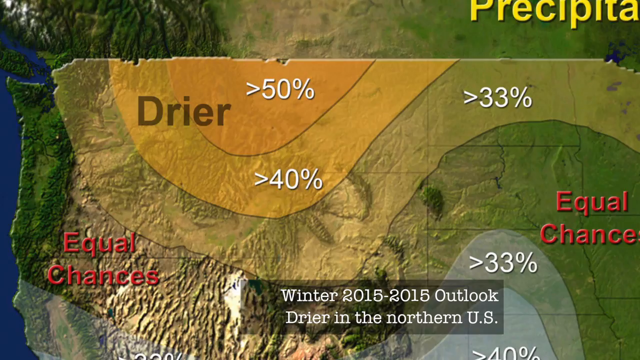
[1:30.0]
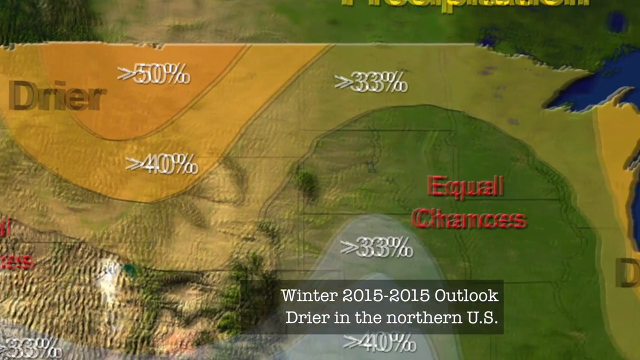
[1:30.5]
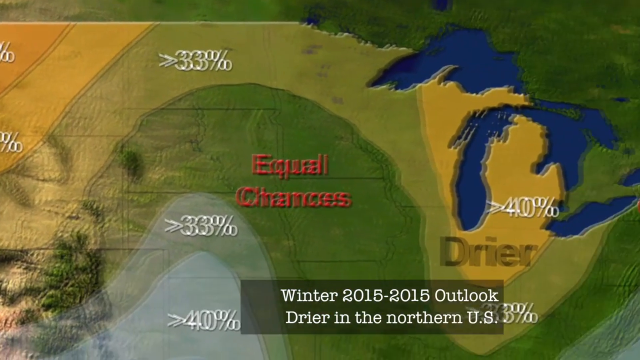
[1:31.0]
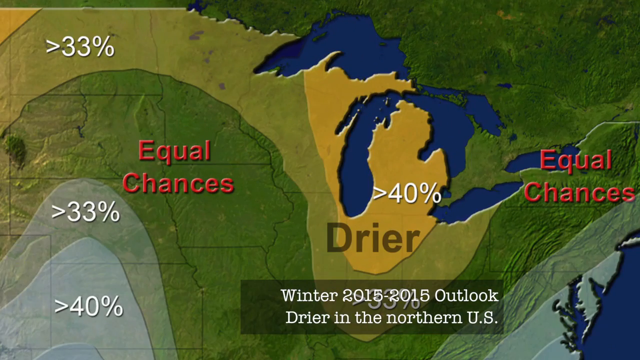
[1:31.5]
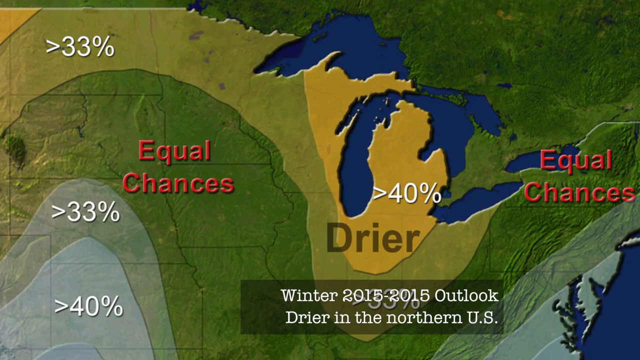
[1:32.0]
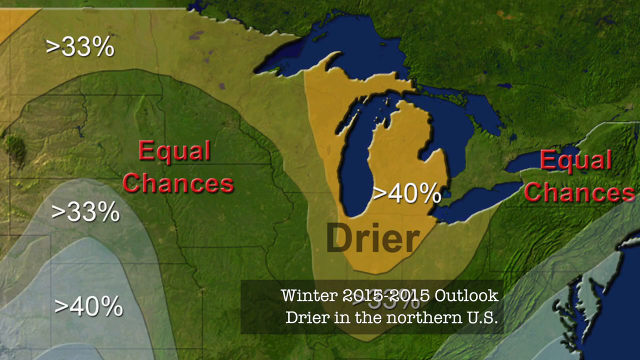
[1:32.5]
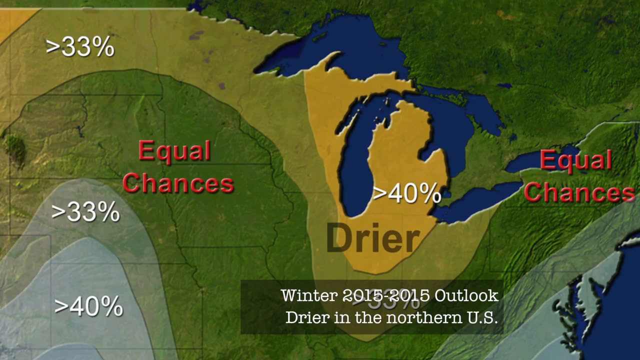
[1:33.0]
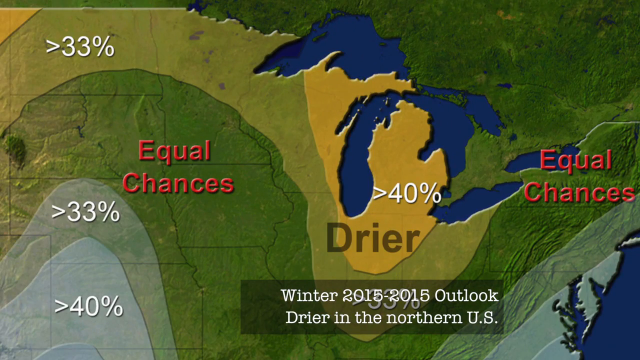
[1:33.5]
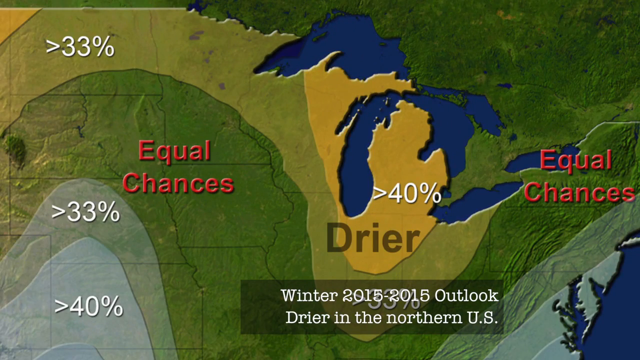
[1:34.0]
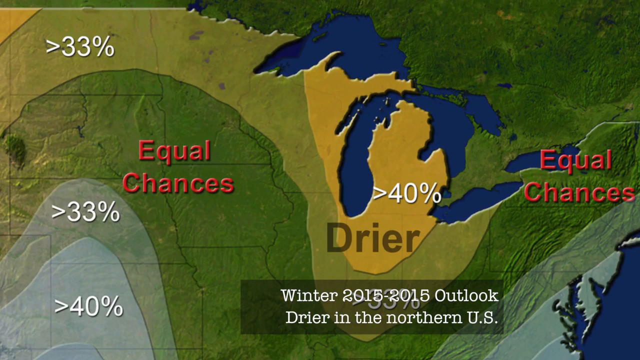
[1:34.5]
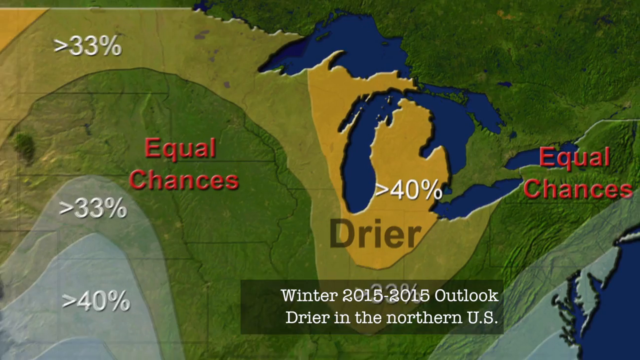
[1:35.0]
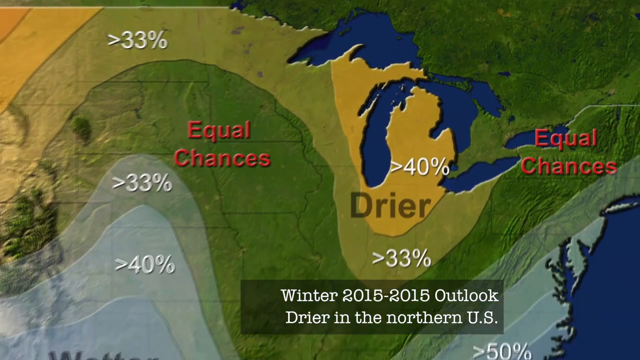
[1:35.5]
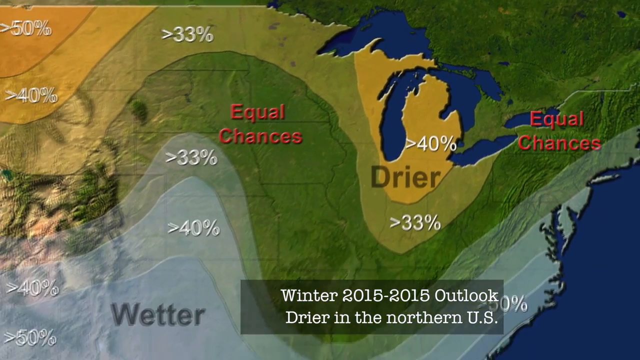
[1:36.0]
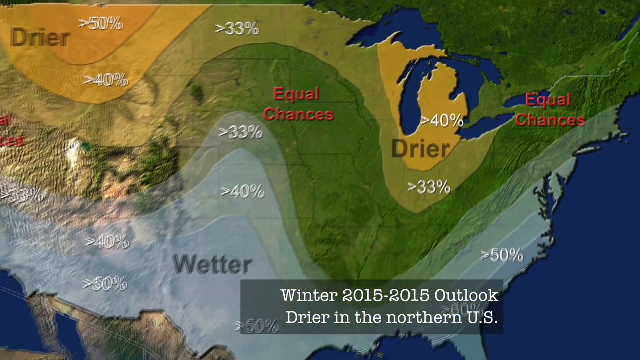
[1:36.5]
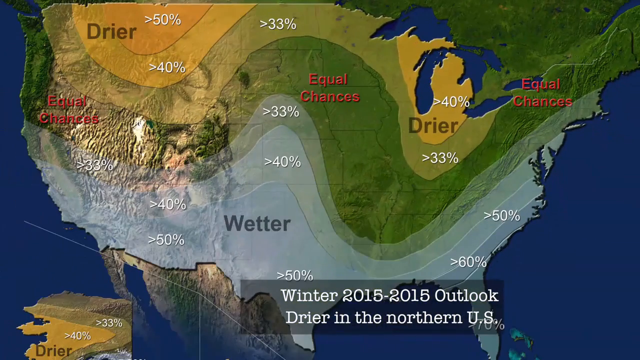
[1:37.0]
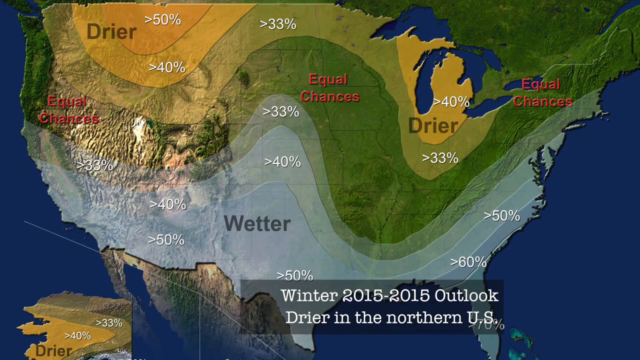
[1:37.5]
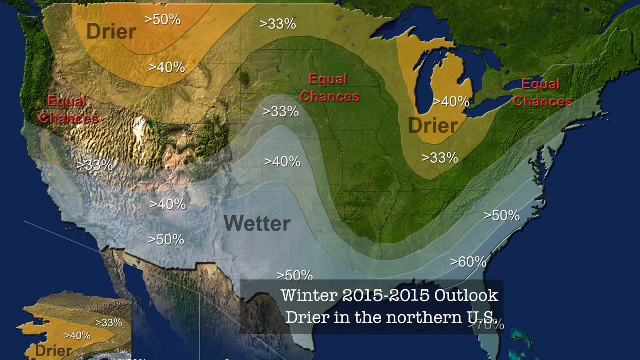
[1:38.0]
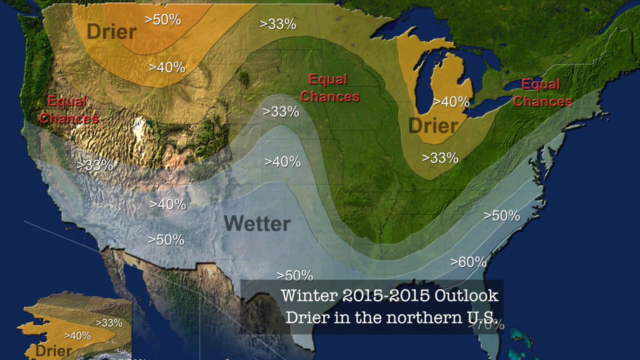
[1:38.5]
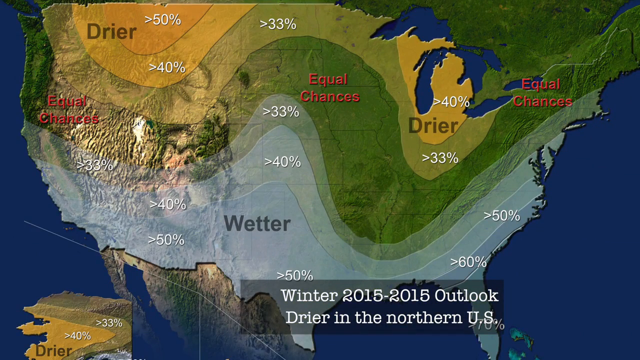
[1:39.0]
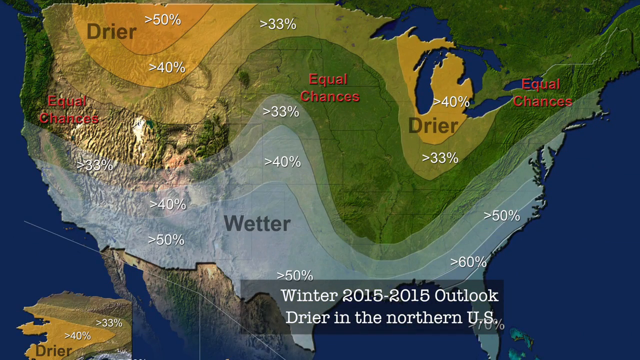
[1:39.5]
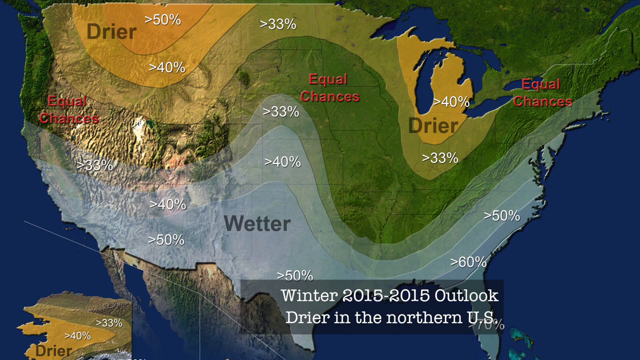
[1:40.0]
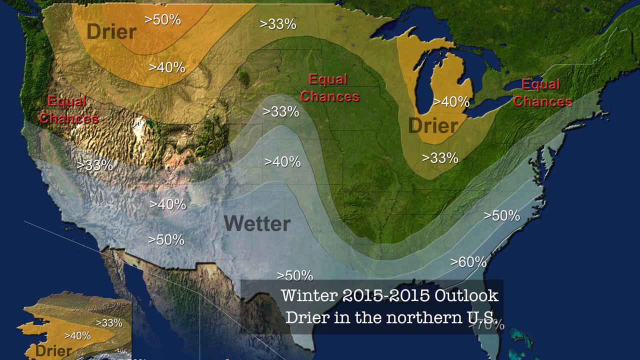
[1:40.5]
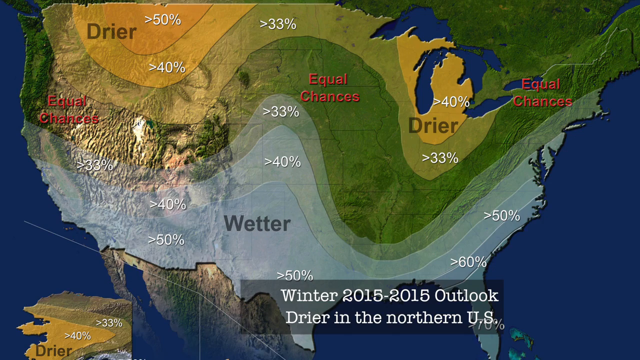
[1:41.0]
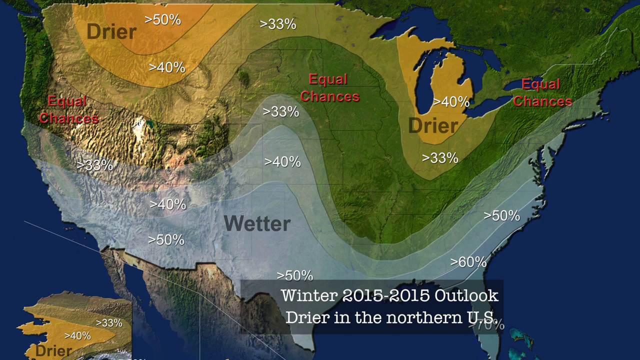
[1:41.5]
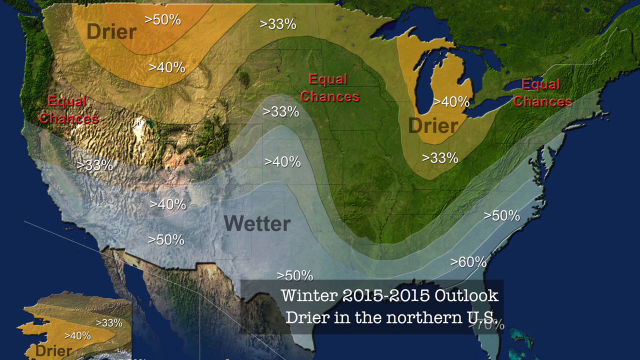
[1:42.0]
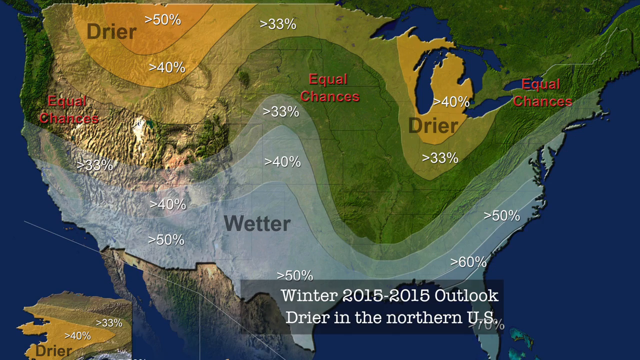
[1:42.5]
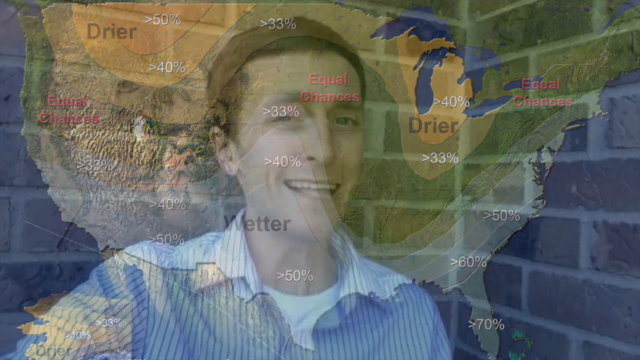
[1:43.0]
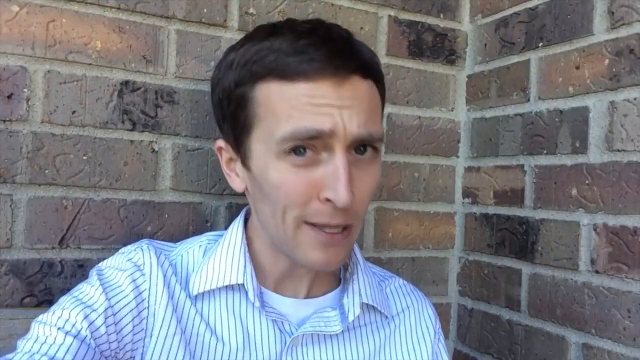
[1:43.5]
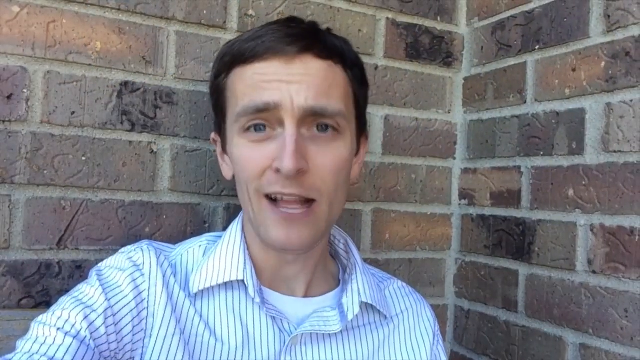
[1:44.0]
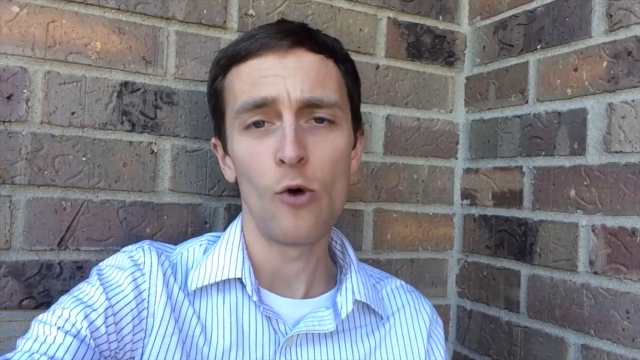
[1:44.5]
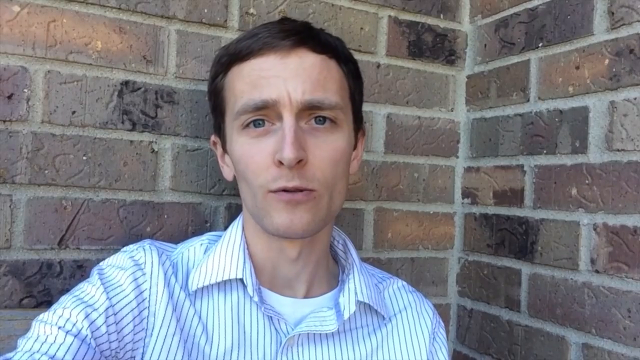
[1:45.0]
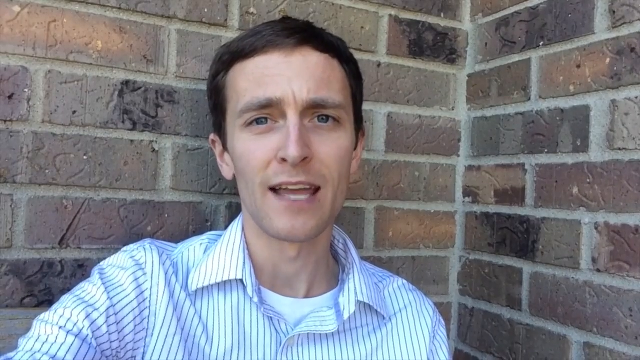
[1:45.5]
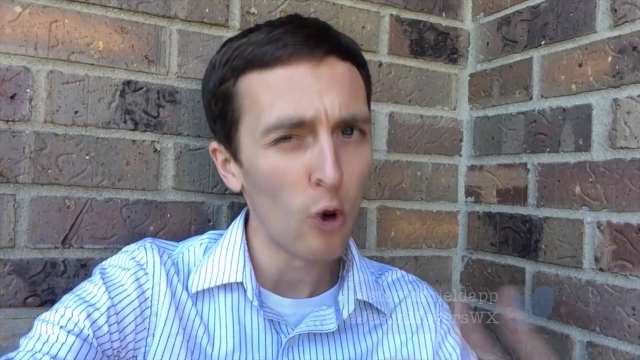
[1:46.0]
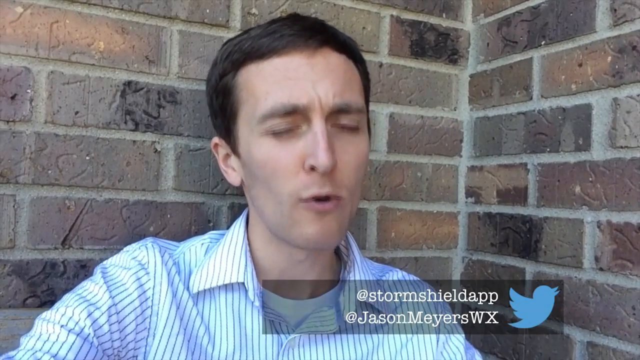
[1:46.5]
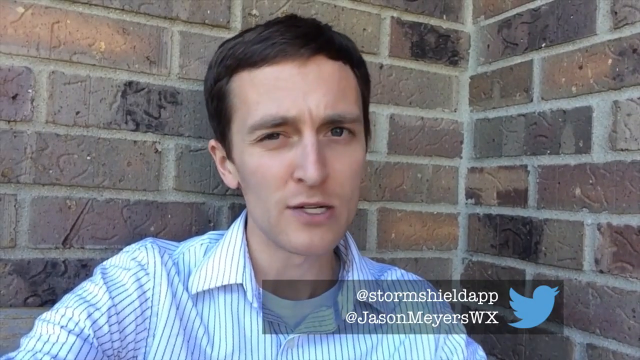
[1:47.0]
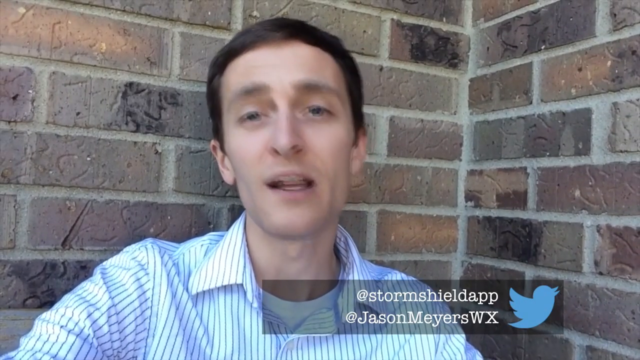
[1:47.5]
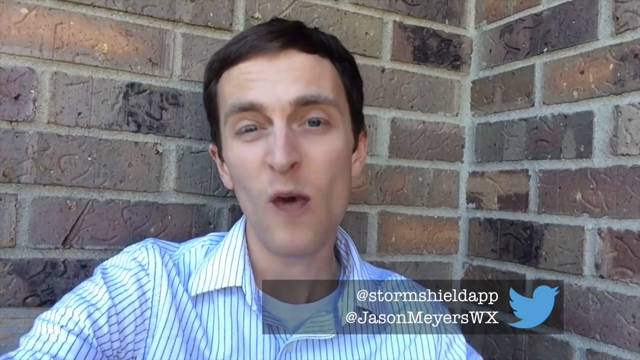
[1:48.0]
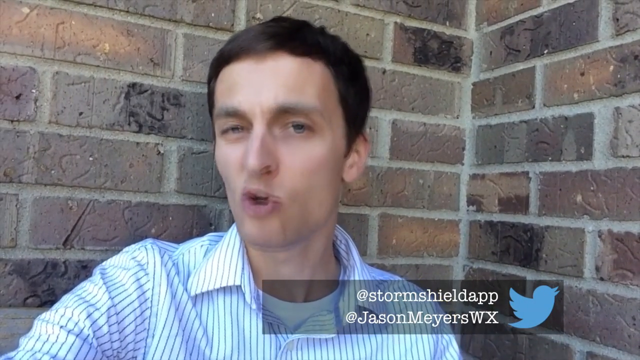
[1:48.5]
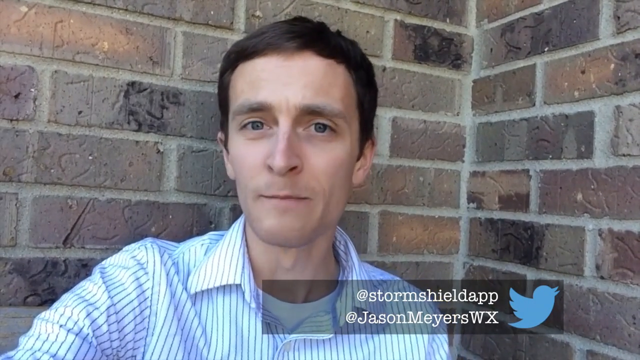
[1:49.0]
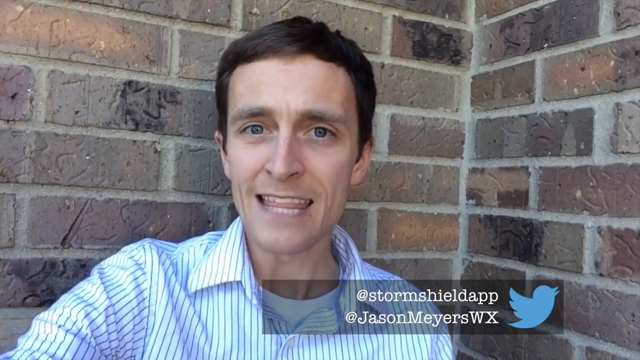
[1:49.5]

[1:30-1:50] The camera pans quickly to the right side of the map of the United States, where "drier 40%" appears near the Great Lakes. The map is in different shades of browns, greens and oranges throughout the United States. At the bottom of the screen, in white font on a see-through background, text reads "winter 2015-2015 outlook drier in the northern U.S." The view zooms out to show the whole map of the United States again. The video then returns to the man standing against a brick wall, wearing the striped white and blue shirt with the white T-shirt underneath. He talks at the camera. On the bottom right are his Twitter names with the Twitter logo: "at Storm Shield app" and, underneath that, "at Jason Meyers WX." He talks animatedly, using his hands, with a slight smirk.